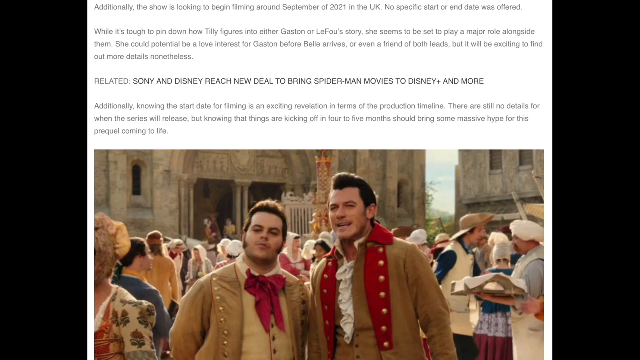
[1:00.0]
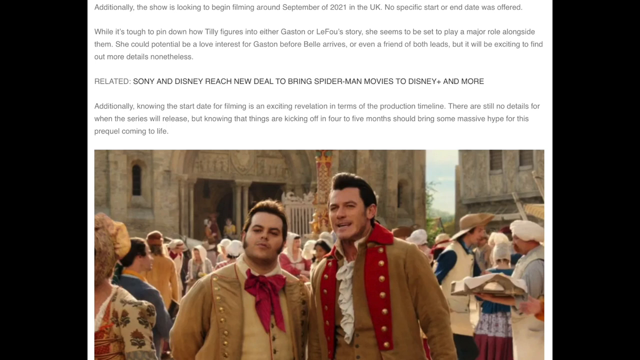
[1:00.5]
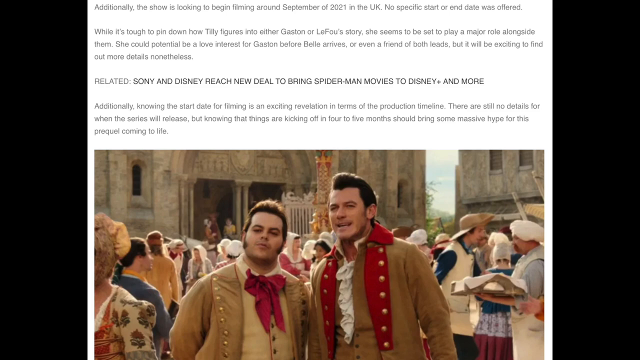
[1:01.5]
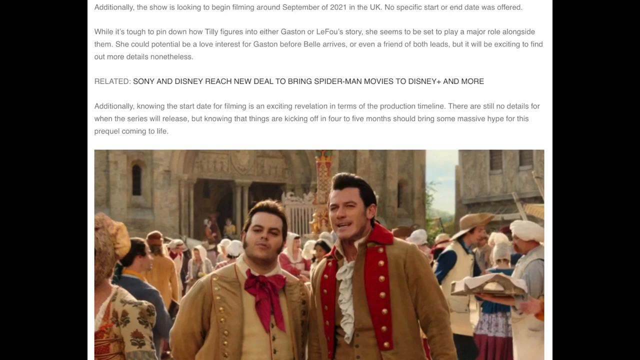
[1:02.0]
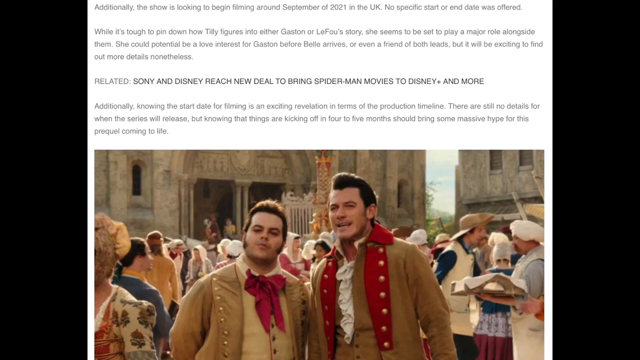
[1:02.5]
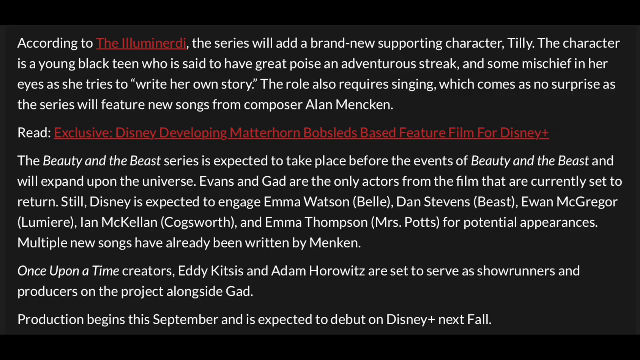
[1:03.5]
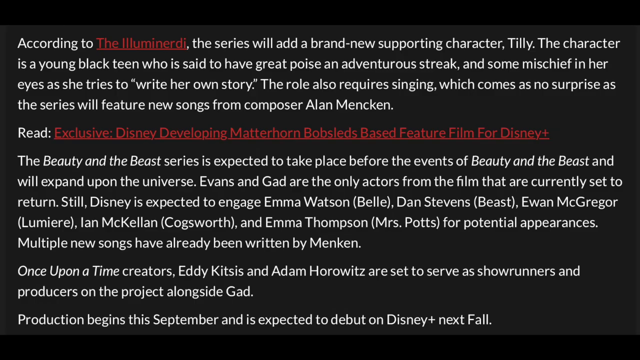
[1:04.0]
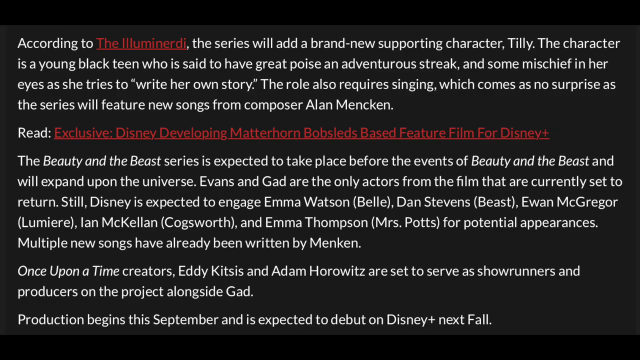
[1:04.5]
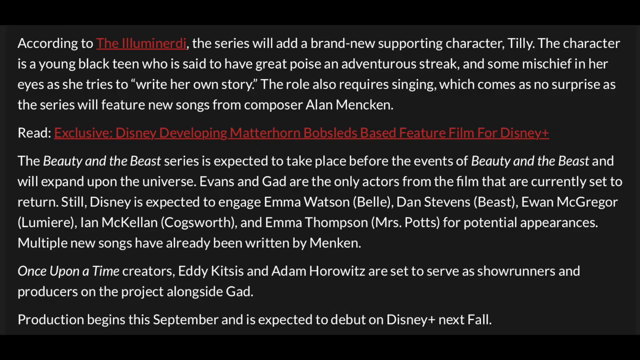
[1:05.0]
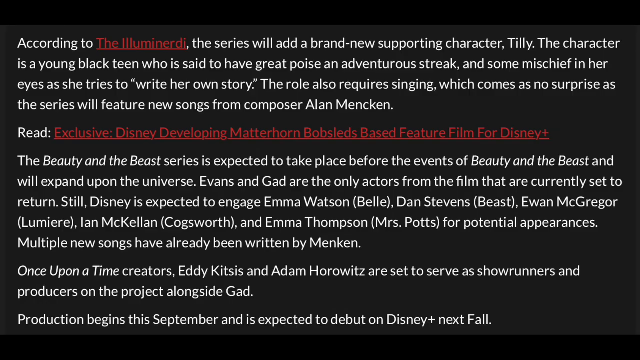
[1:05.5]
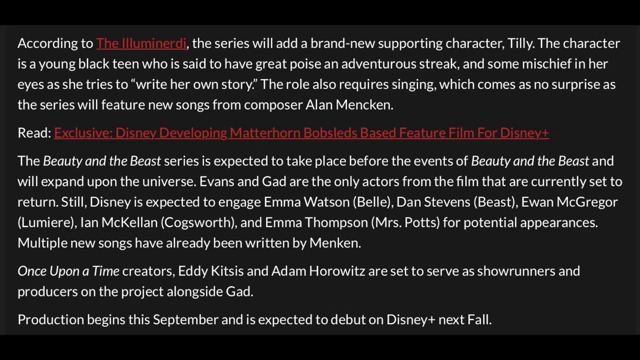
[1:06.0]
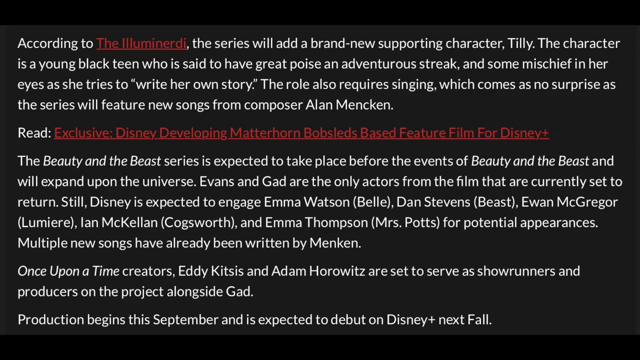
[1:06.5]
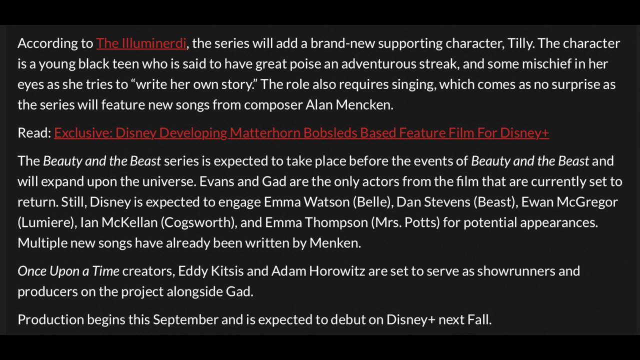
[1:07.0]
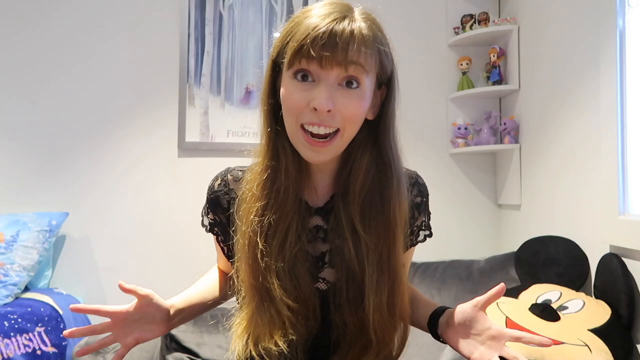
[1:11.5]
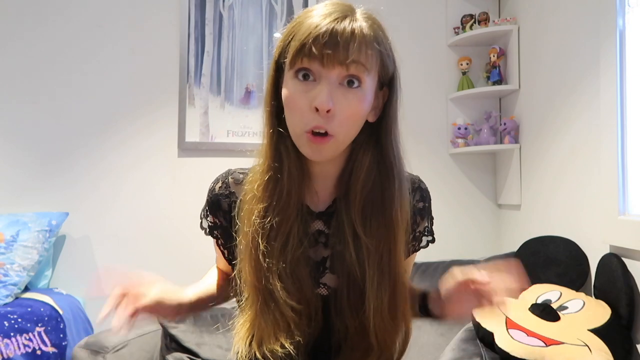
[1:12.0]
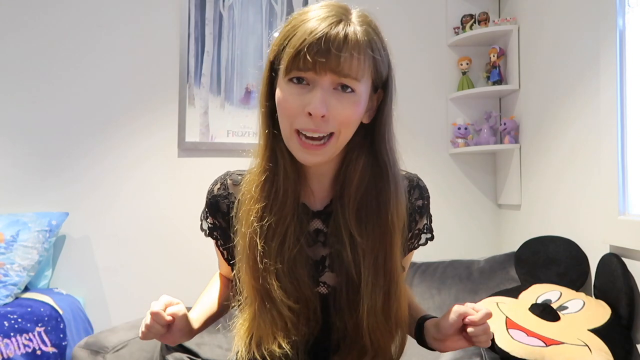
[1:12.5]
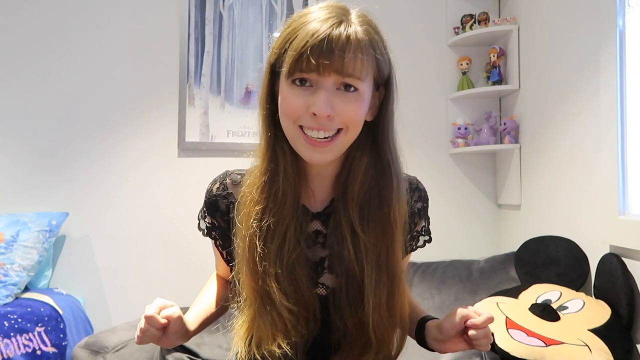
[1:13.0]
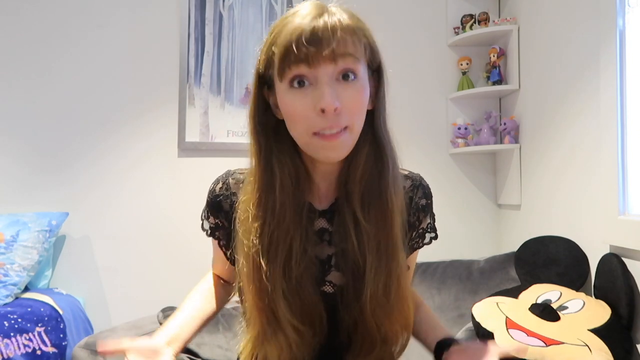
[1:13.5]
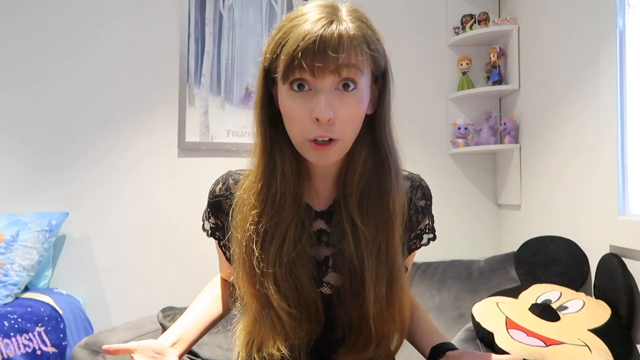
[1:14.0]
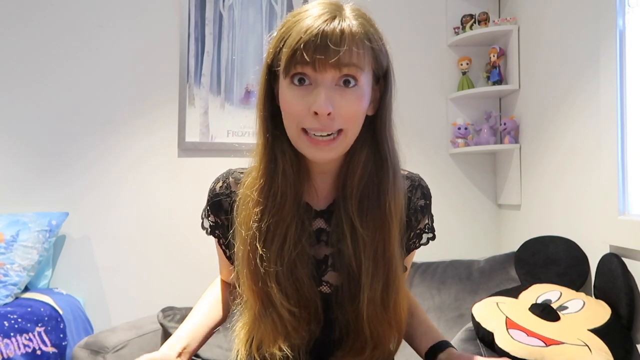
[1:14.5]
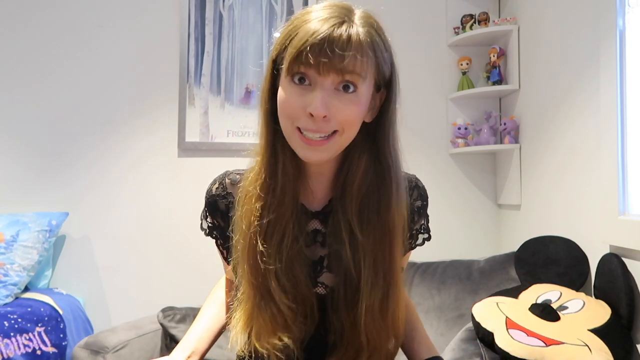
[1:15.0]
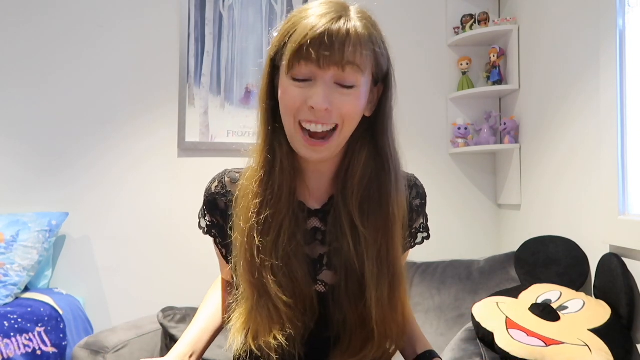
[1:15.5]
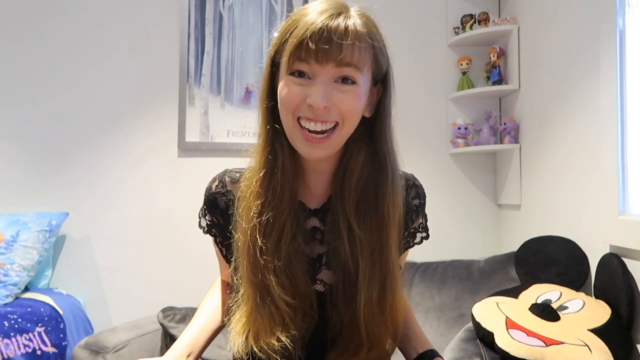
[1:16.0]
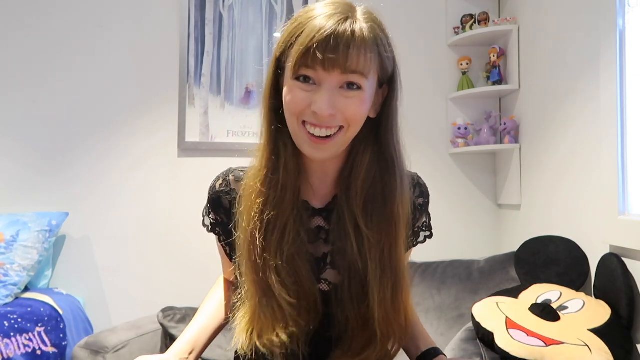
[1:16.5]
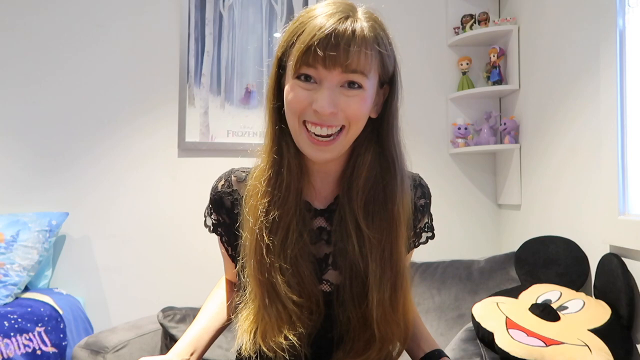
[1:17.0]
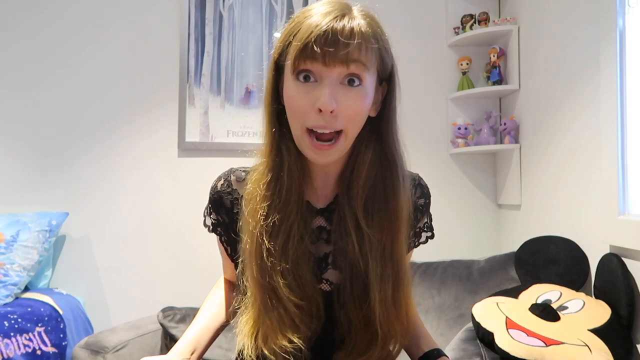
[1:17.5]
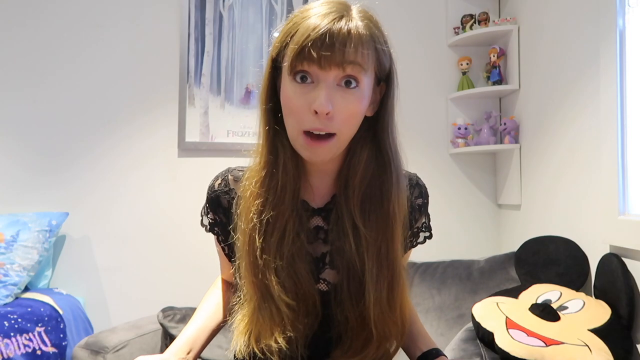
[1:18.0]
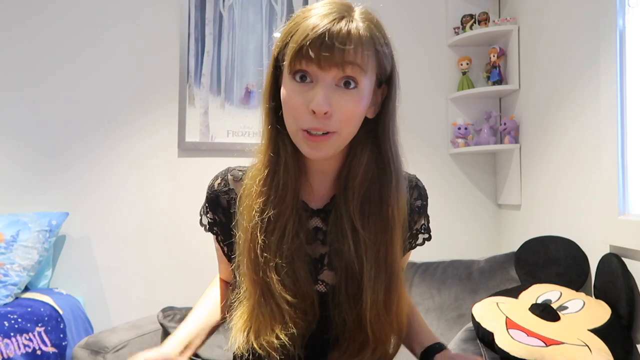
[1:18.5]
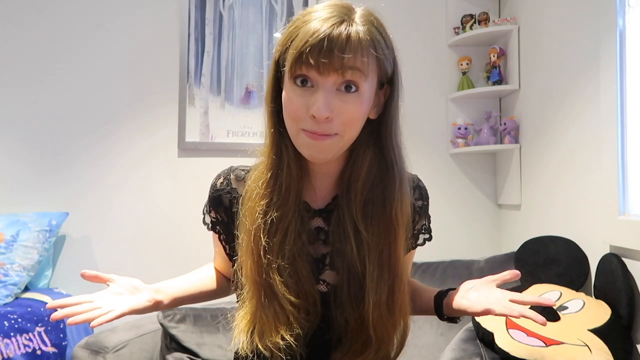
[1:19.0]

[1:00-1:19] The two men are shown in a photo with a crowd that is going about its own business. On-screen text includes "The series will add a brand new supporting character, Tilly. The character is a young black teen who is said to have great poise," and "The Beauty and the Beast series is expected to take place before the event of Beauty and the Beast and will expand upon the universe. Evans and Gard are the only actors from the film that are currently set to return." The text also names Emma Watson, Dan Stevens and Emma Thompson, and ends with "Production begins this September and is expected to debut on Disney Plus next fall."